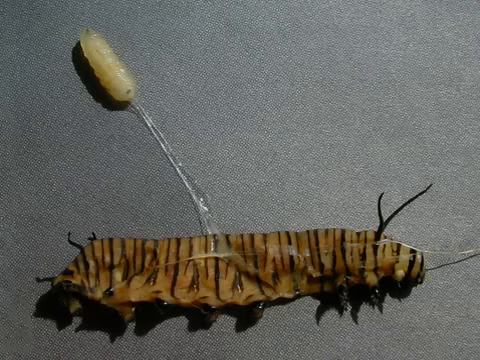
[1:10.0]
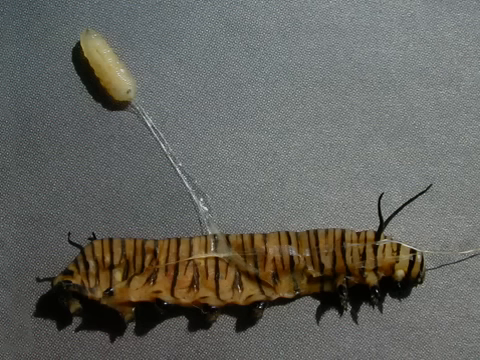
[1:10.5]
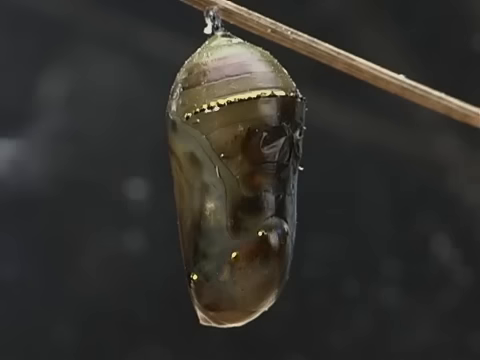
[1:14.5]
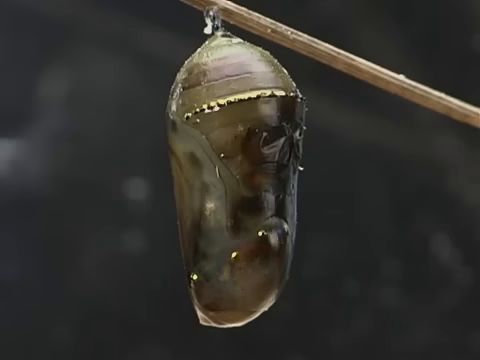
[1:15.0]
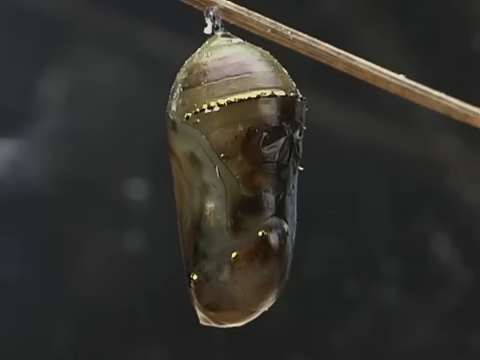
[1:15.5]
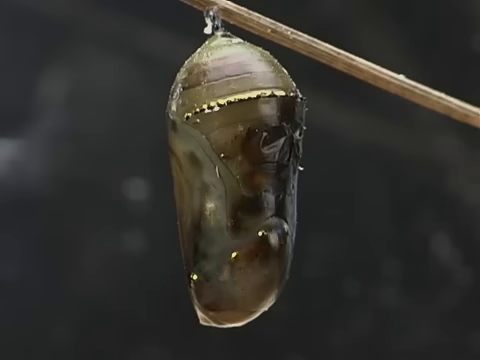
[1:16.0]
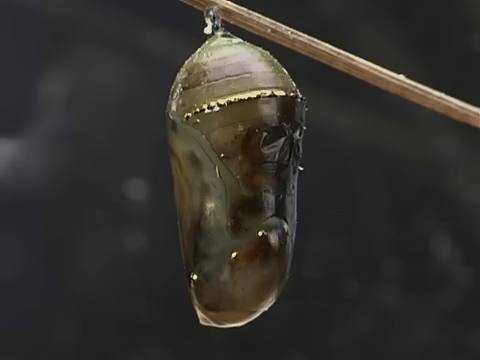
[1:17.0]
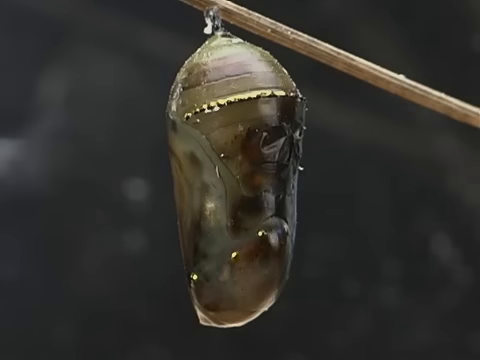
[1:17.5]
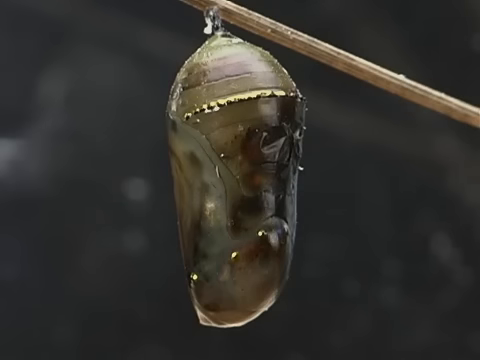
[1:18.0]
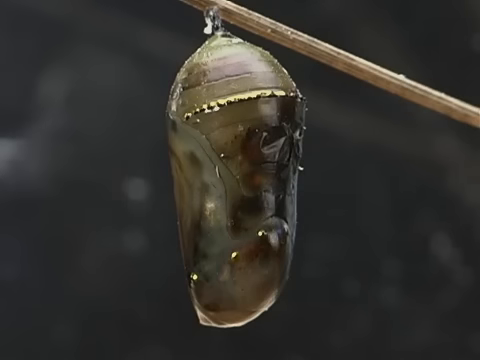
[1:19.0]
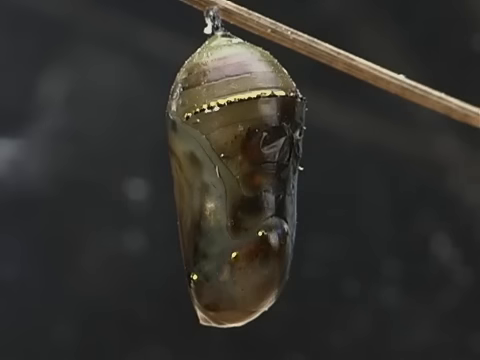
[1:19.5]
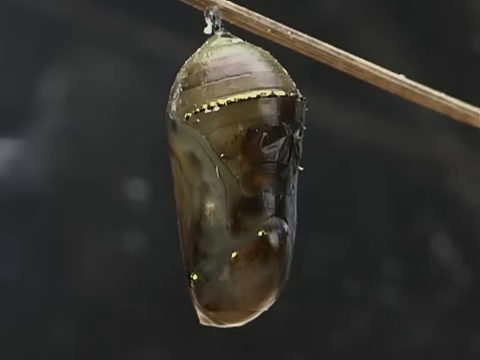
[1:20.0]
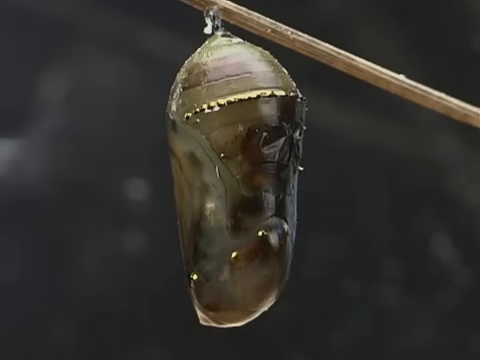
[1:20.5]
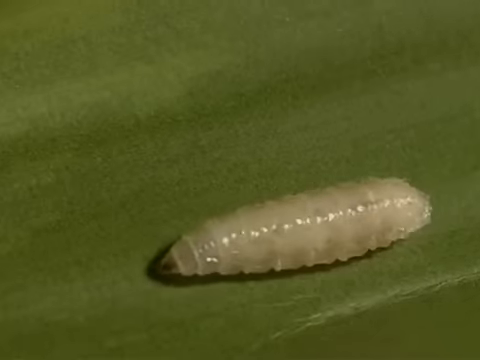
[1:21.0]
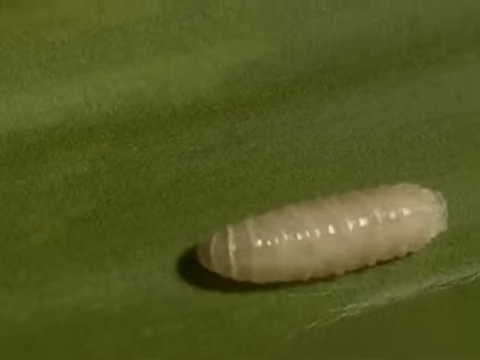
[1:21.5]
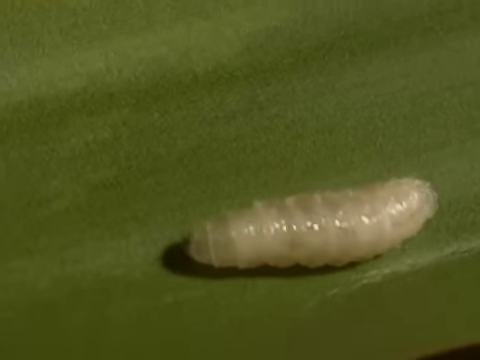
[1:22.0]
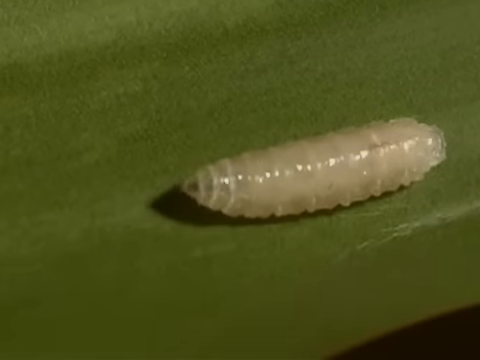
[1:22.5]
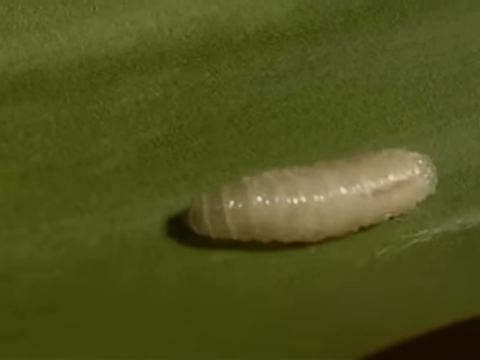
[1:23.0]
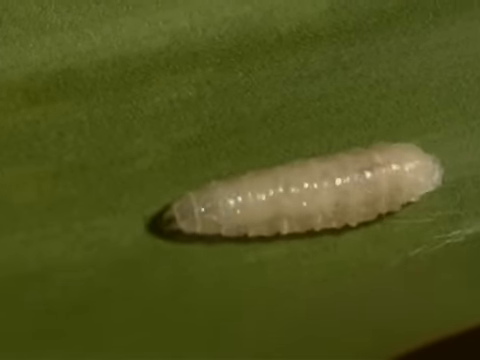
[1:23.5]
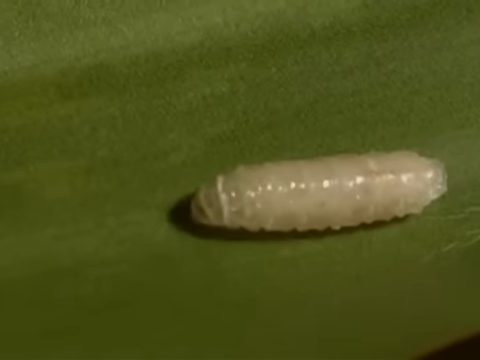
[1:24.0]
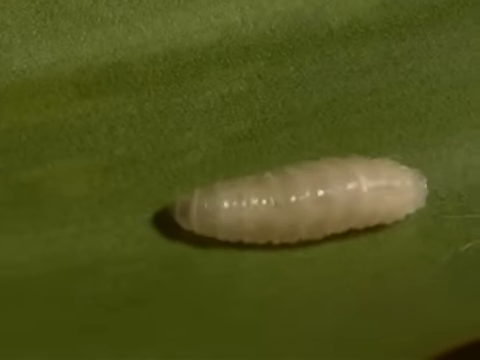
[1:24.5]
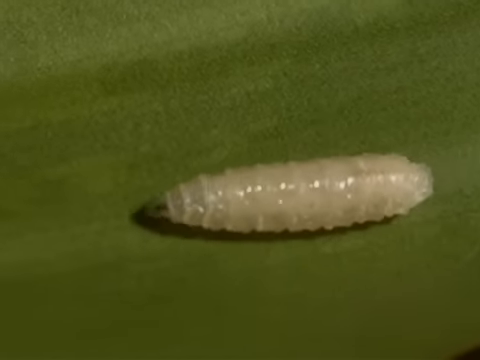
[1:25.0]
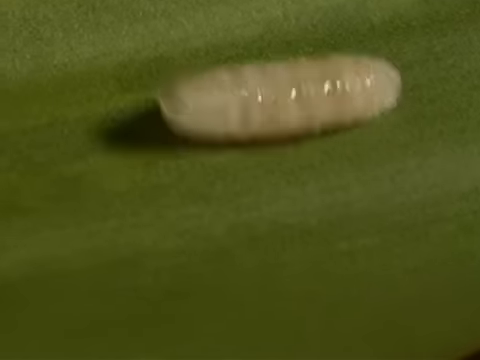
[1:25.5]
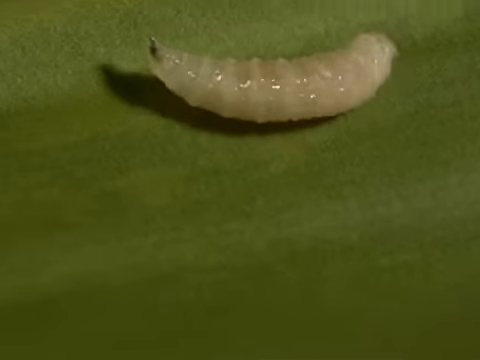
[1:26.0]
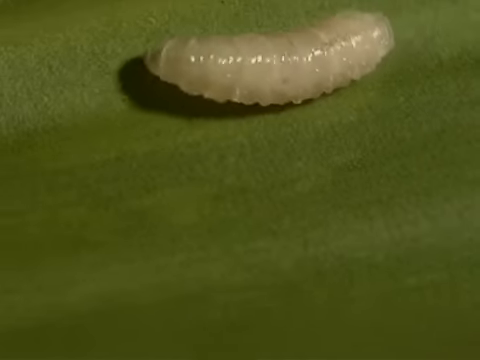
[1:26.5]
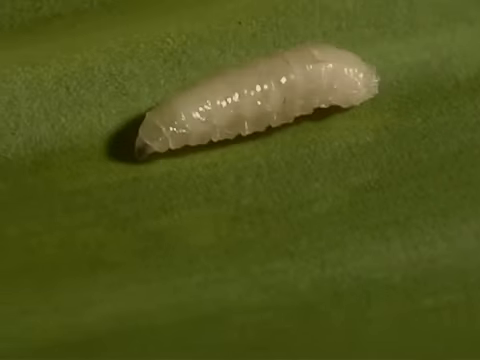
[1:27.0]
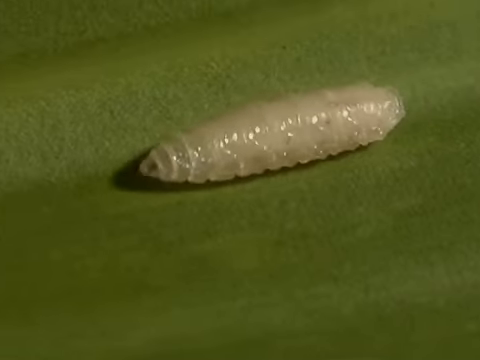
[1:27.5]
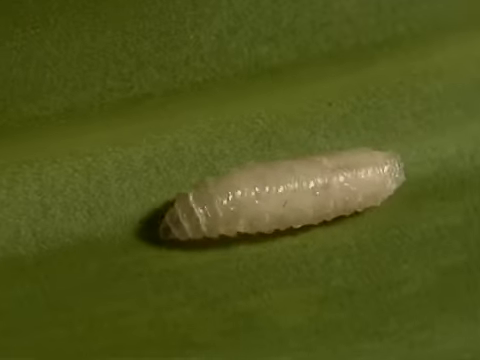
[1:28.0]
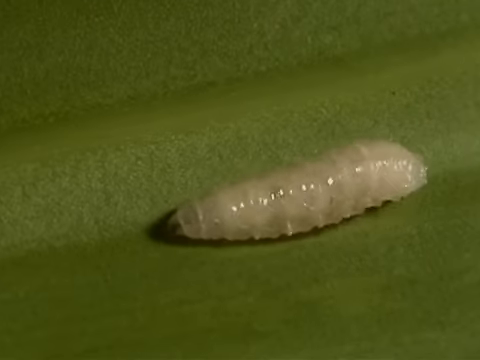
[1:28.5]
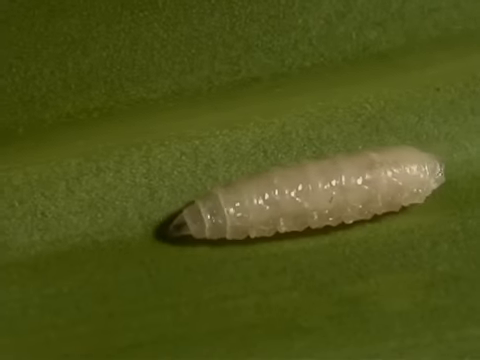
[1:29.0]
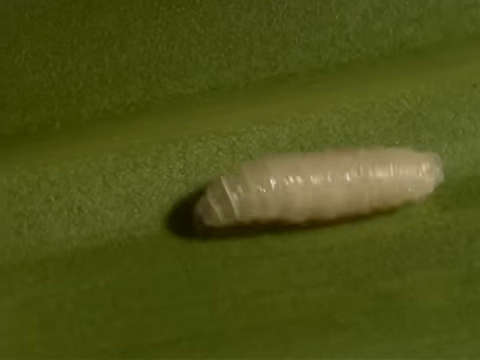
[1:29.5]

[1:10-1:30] A stick runs diagonally upward on the right-hand side of the screen against a black background. Hanging from the stick is something like a pupa: a rectangular shape with a rounded, pointed top, looking a bit like a honeycomb hat. The pupa is seen coming down, and there is something black inside it that cannot quite be seen through. The hatched pupa then crawls along a leaf; it is white with little segments along its body. It rolls to the right-hand side and rolls right over, probably twice, then regains its balance and continues traveling forward in a line, moving like a caterpillar with its body going up and down quite quickly. Its front is very pointed and black, much darker than the rest of the body.